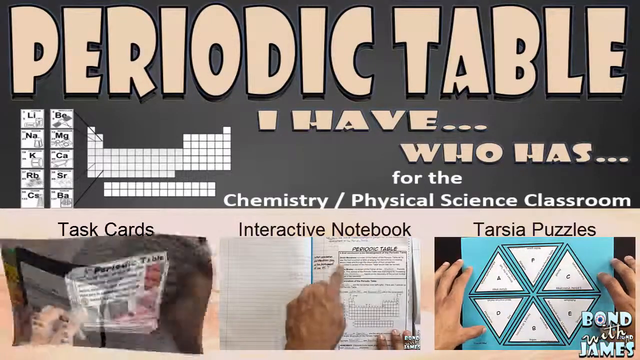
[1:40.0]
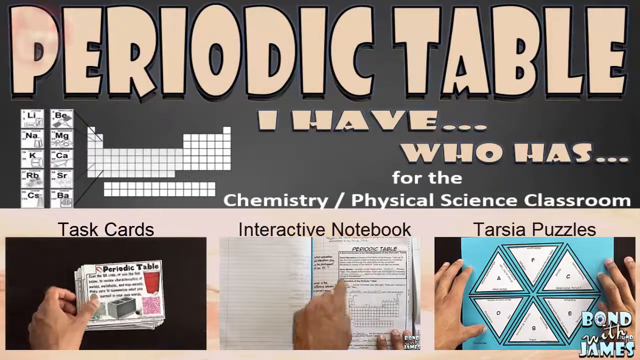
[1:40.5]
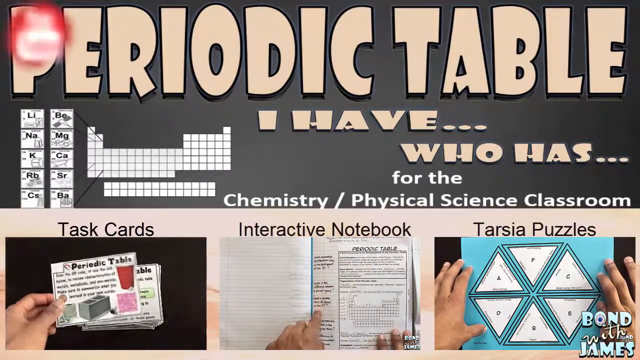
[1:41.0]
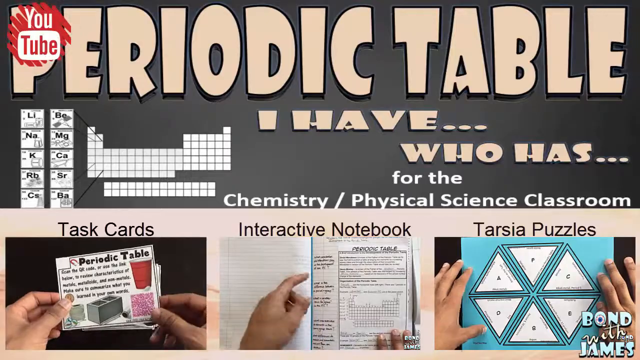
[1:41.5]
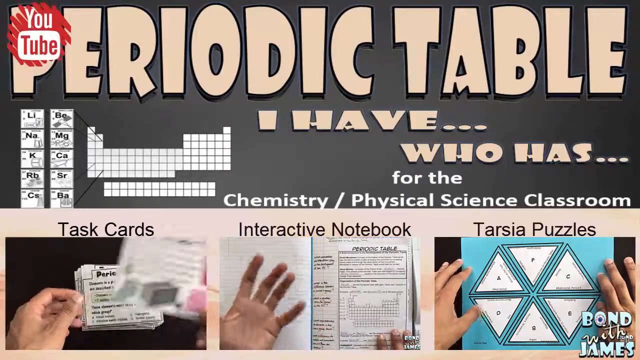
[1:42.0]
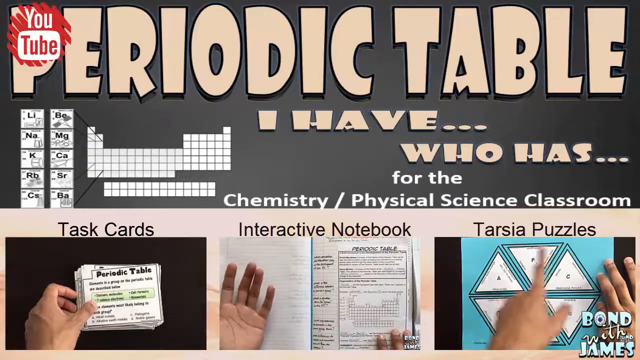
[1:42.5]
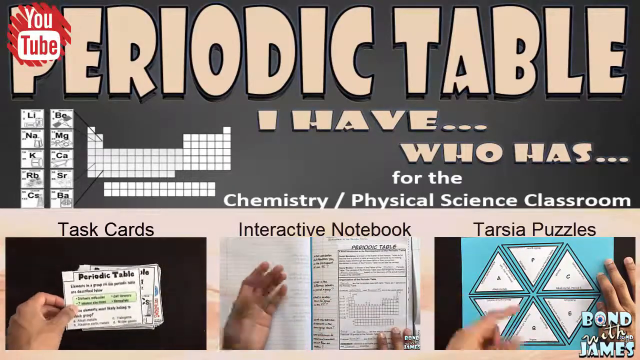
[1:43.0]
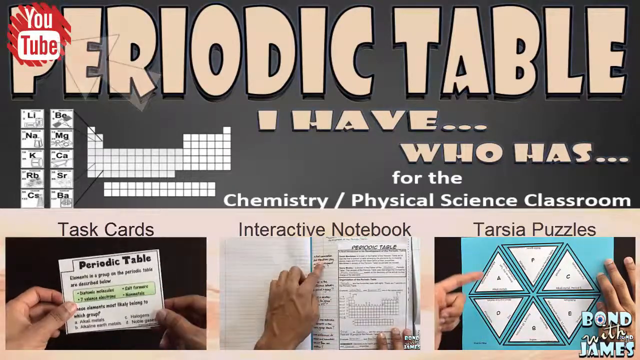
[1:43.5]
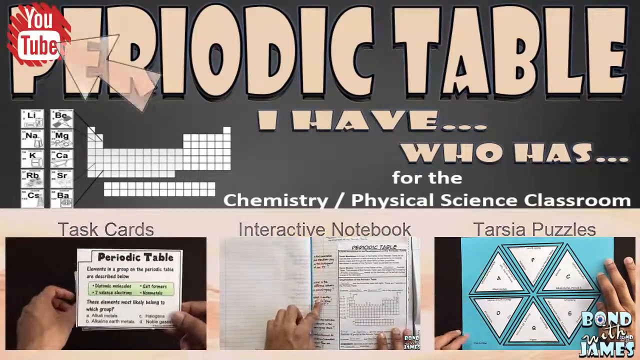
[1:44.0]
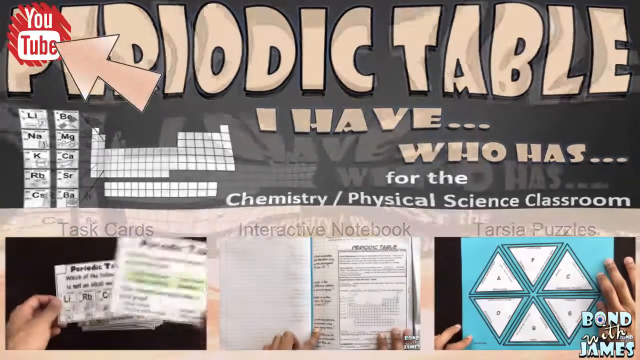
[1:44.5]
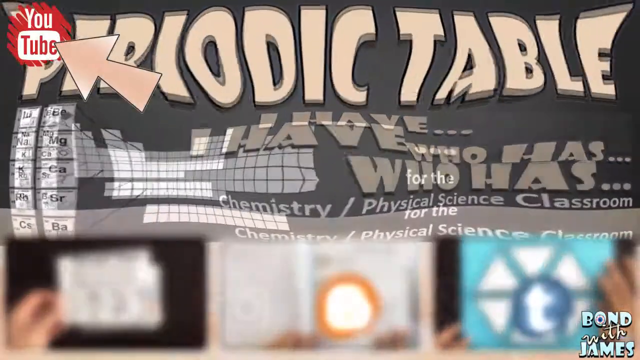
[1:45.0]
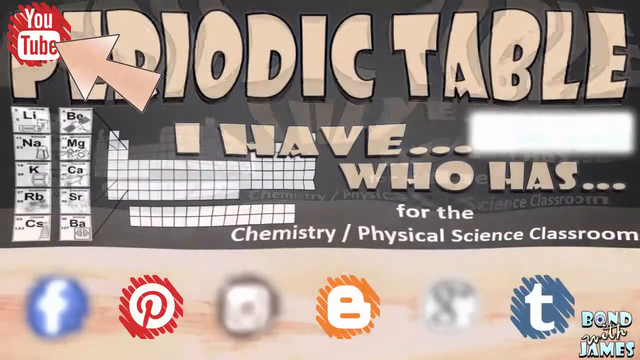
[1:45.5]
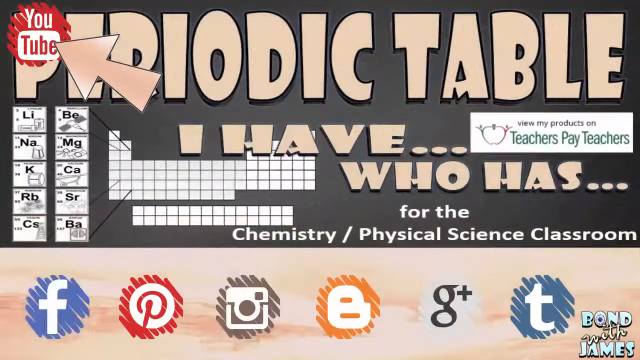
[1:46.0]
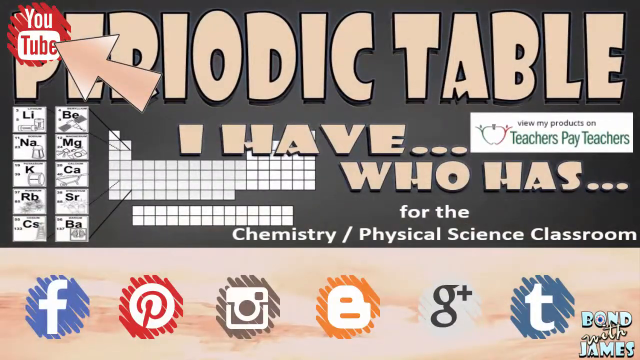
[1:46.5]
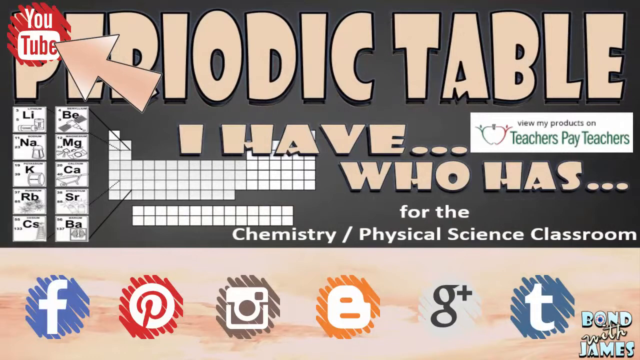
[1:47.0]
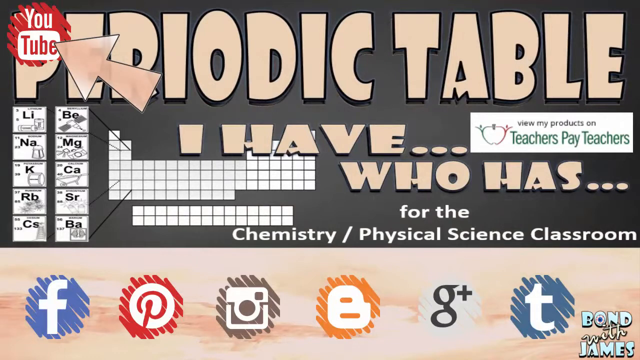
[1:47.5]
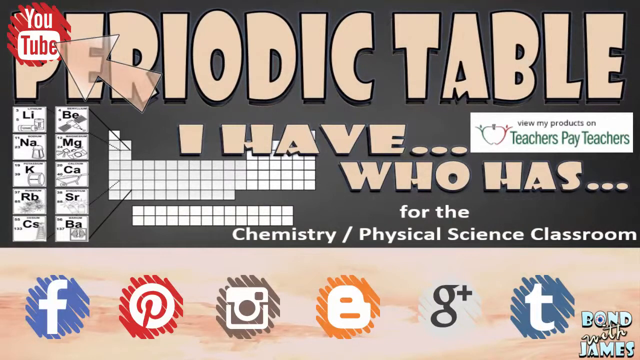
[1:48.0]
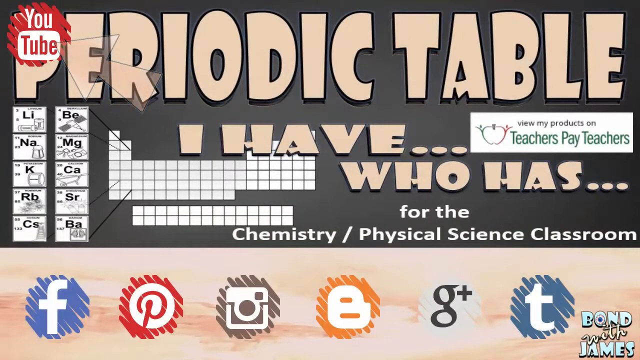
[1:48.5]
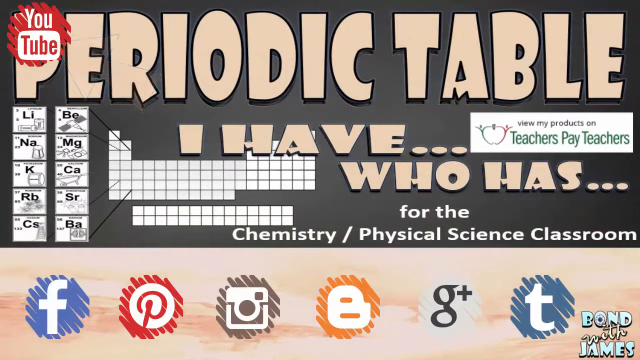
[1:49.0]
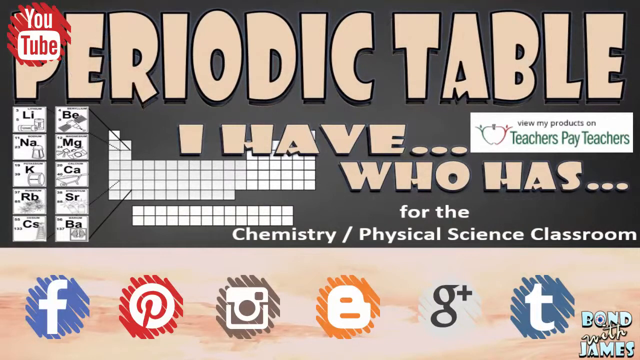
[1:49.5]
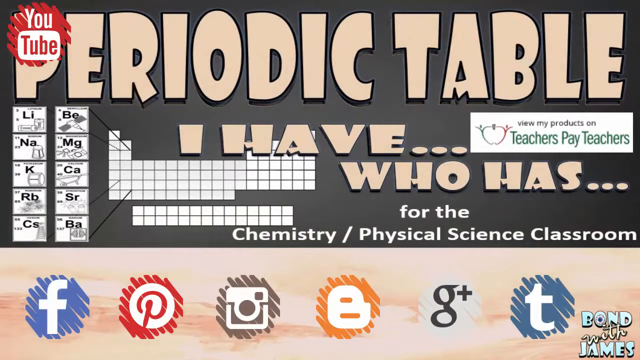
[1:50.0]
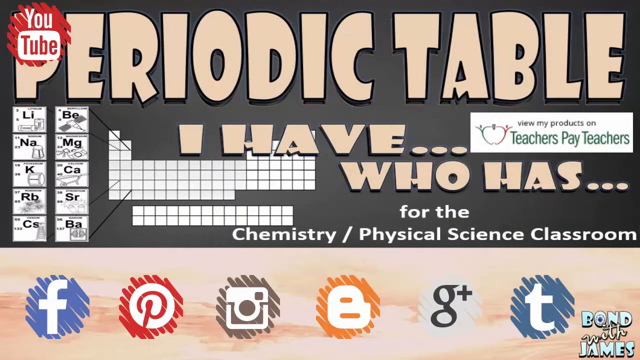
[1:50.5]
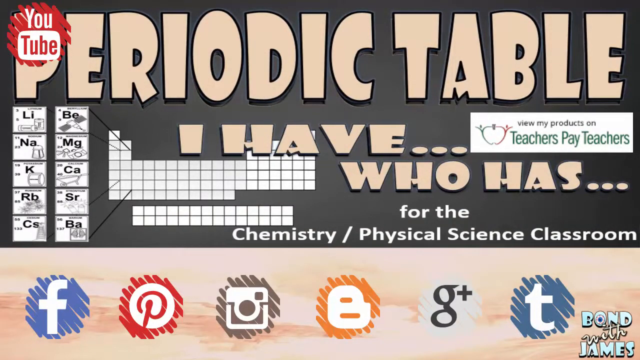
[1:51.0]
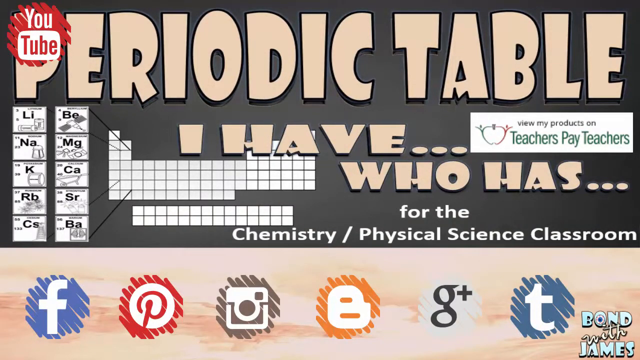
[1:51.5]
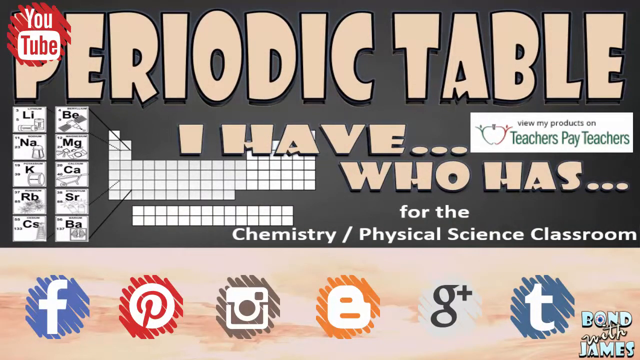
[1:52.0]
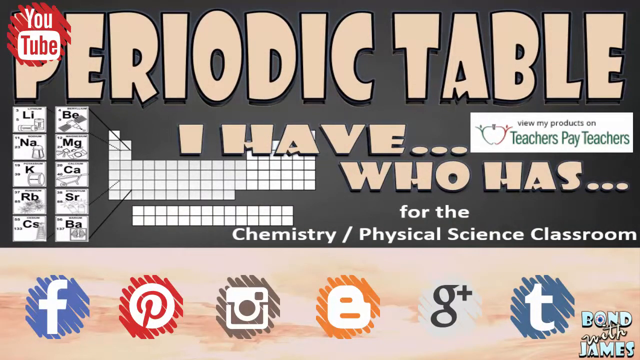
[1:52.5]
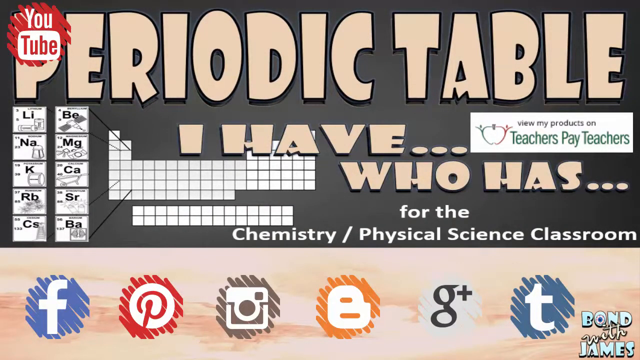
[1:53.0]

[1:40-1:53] A poster with the title "Periodic Table" at the top is shown, with a YouTube logo in the top left corner, suggesting the video was made for YouTube. The scene transitions to an arrow pointing to the YouTube logo at the top left. On the right side is another logo that says "view my products on Teachers Pay Teachers". At the bottom of the poster are logos of social media websites, including Facebook, Pinterest, Instagram, Bing, and Google Plus.